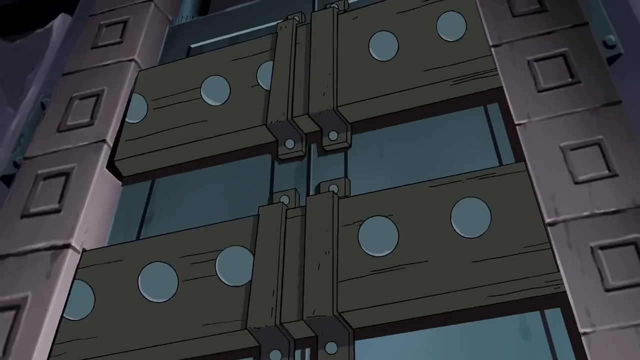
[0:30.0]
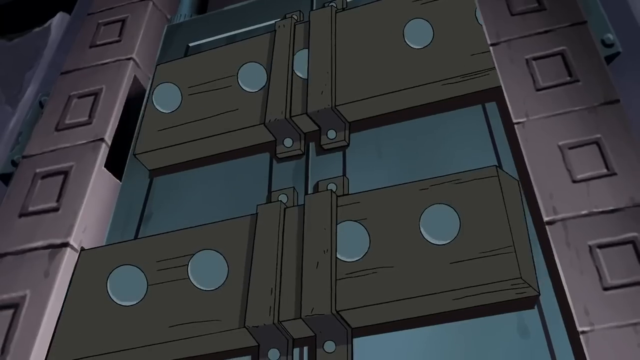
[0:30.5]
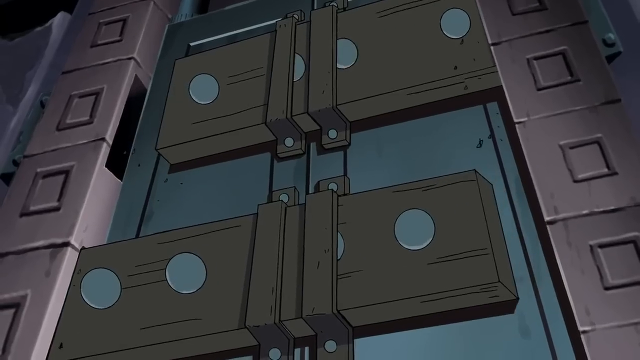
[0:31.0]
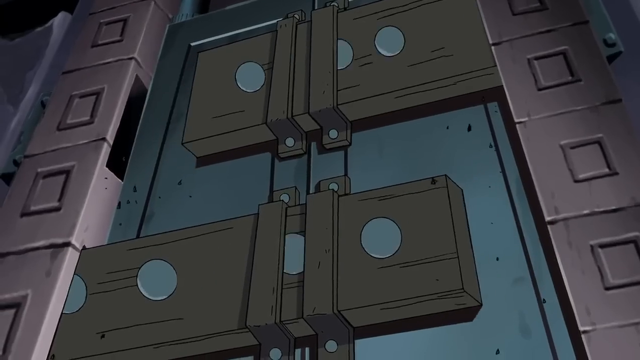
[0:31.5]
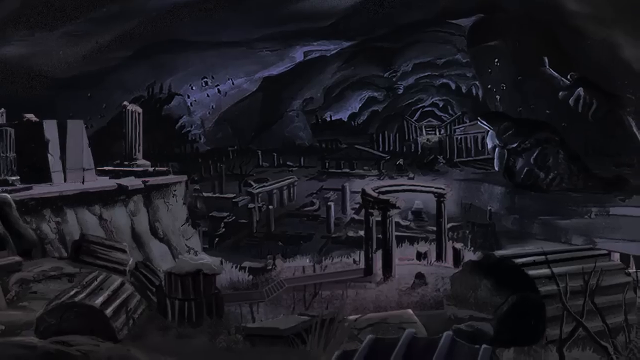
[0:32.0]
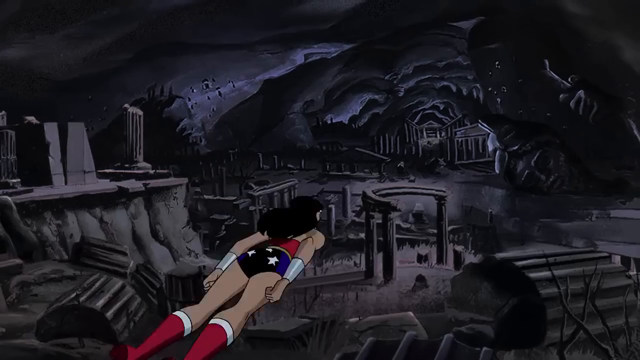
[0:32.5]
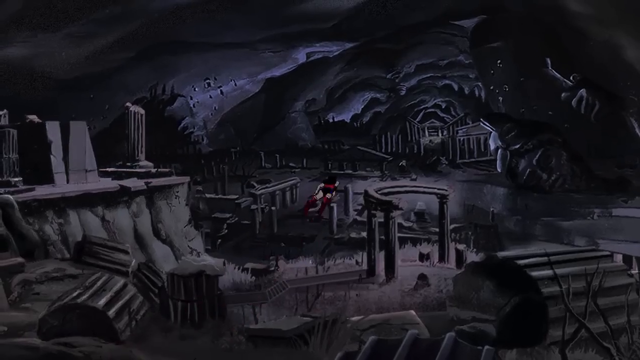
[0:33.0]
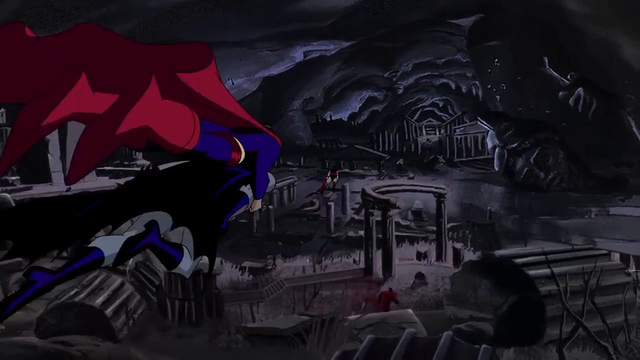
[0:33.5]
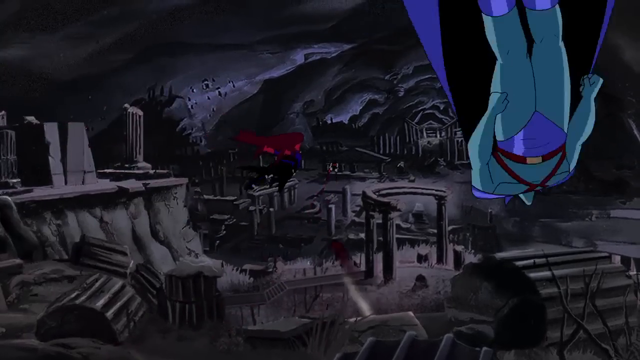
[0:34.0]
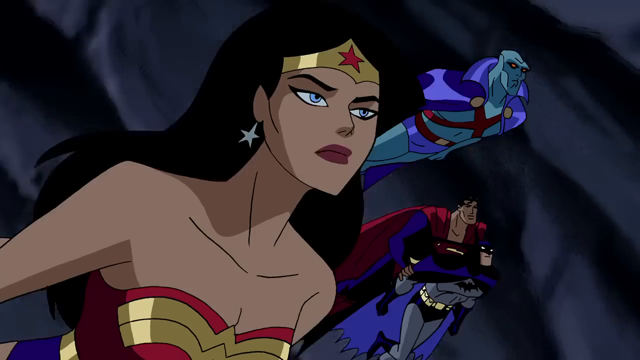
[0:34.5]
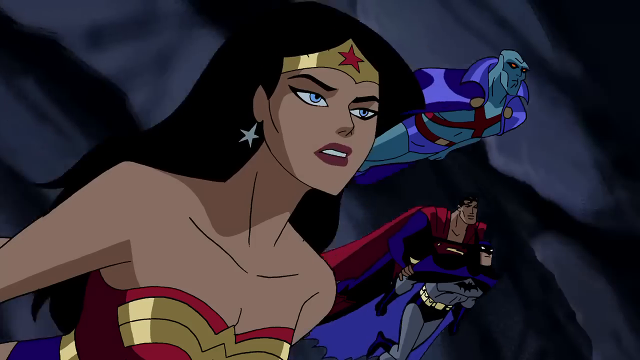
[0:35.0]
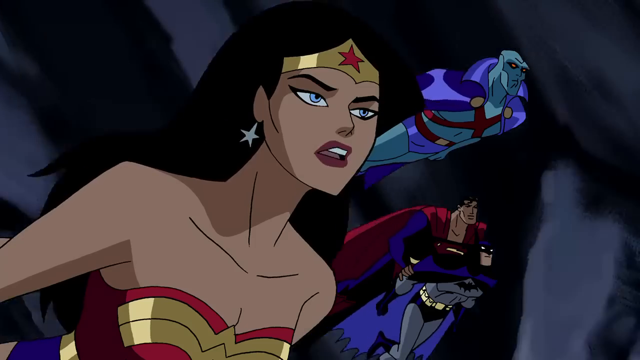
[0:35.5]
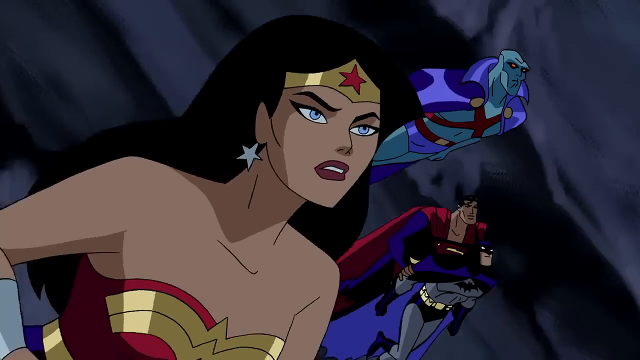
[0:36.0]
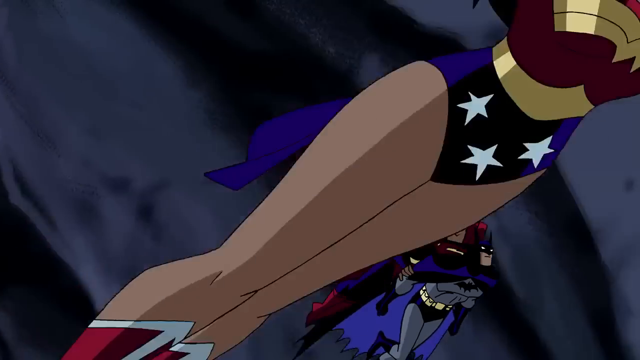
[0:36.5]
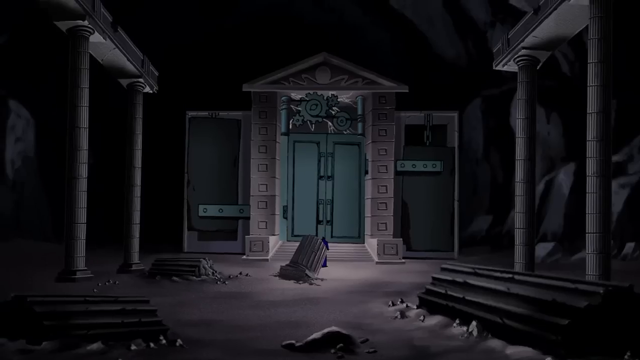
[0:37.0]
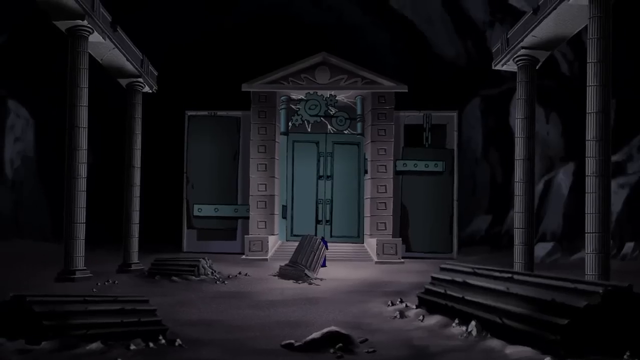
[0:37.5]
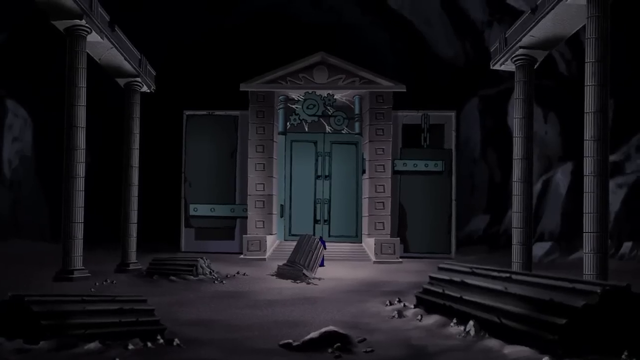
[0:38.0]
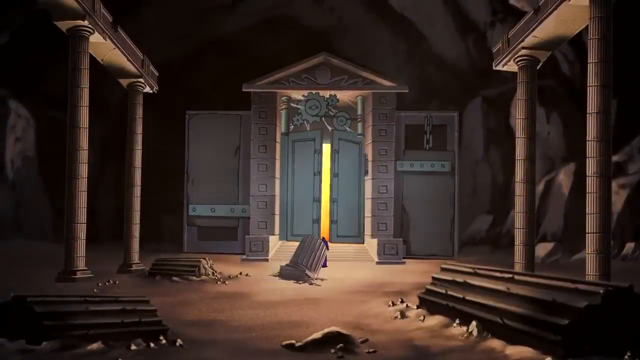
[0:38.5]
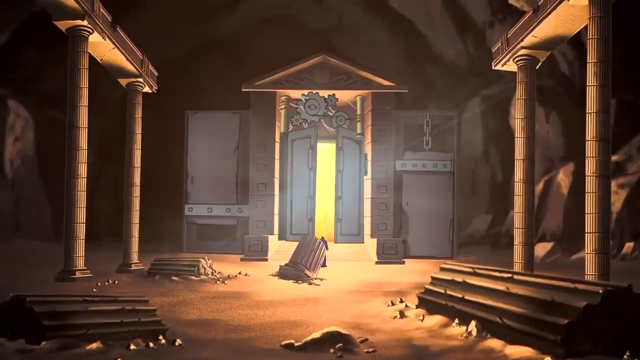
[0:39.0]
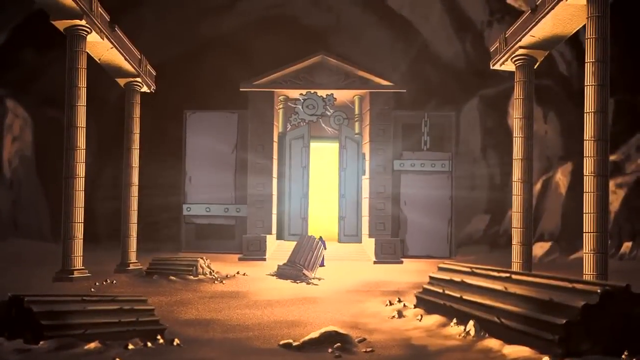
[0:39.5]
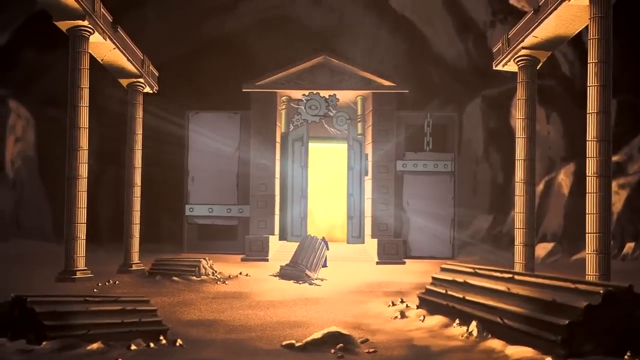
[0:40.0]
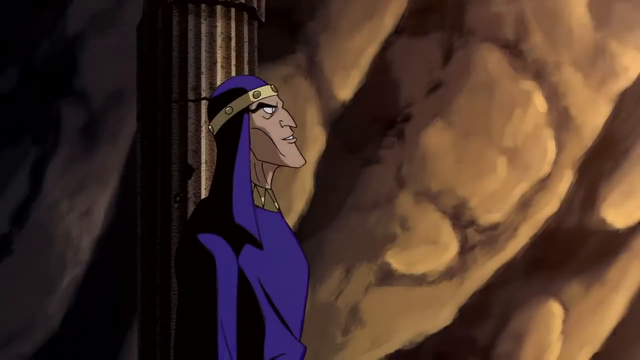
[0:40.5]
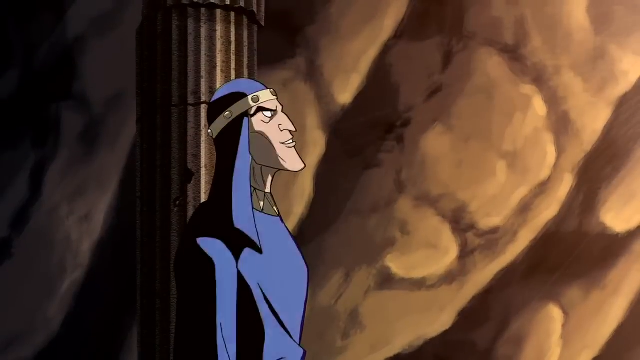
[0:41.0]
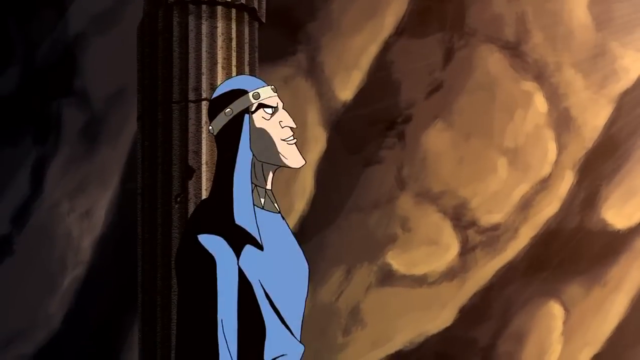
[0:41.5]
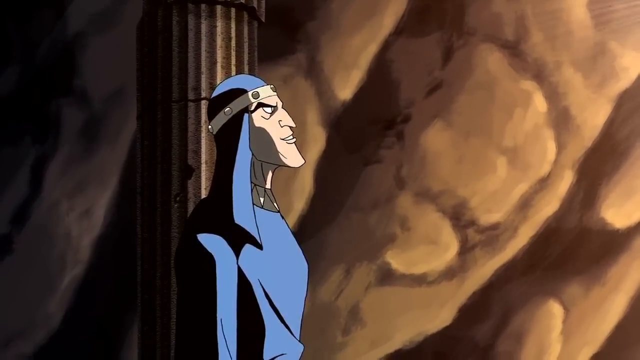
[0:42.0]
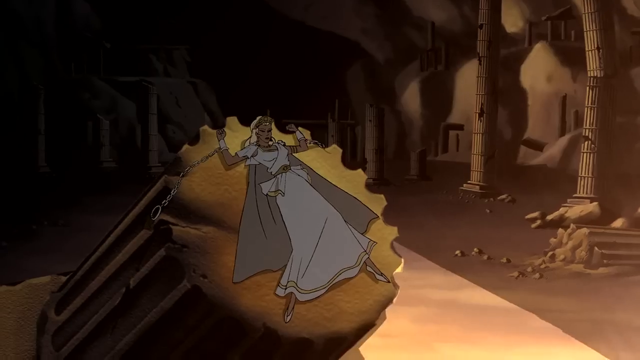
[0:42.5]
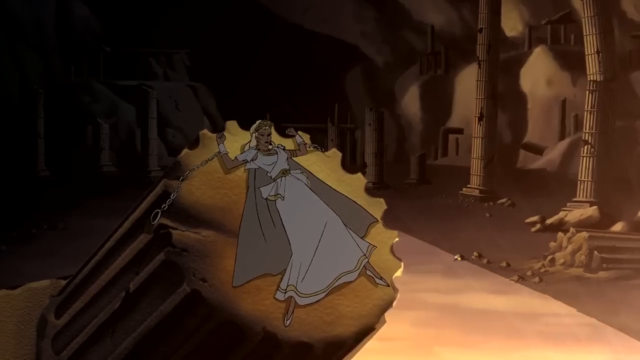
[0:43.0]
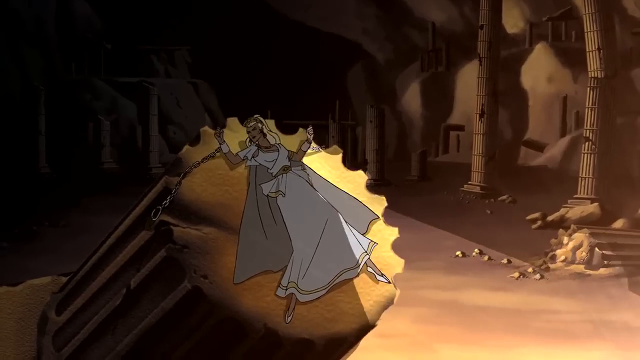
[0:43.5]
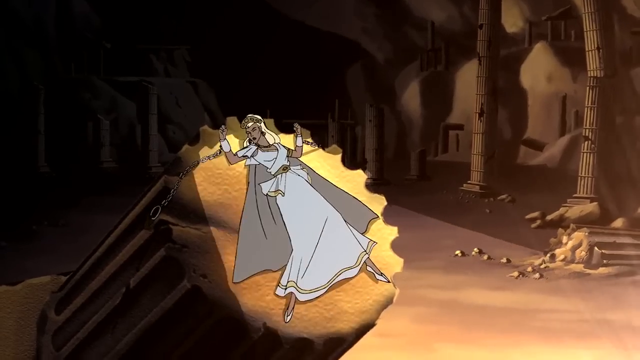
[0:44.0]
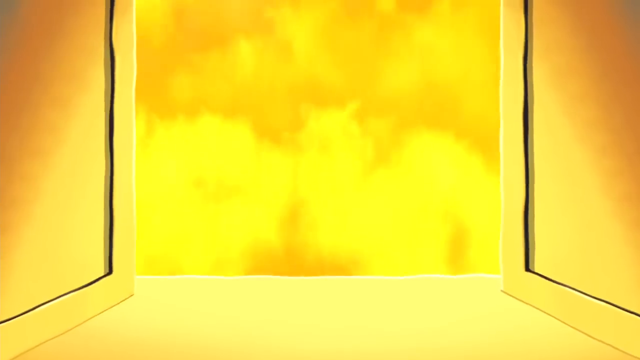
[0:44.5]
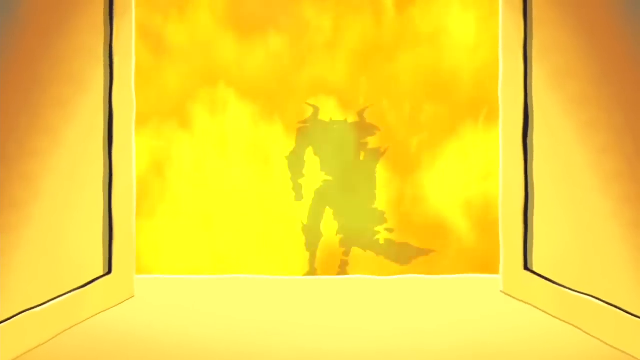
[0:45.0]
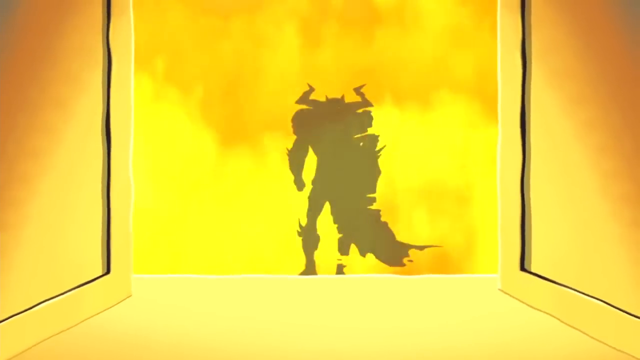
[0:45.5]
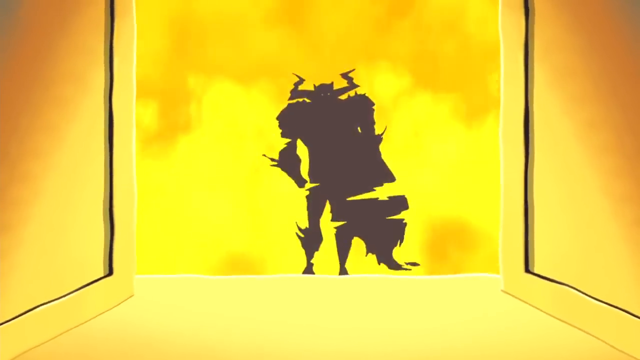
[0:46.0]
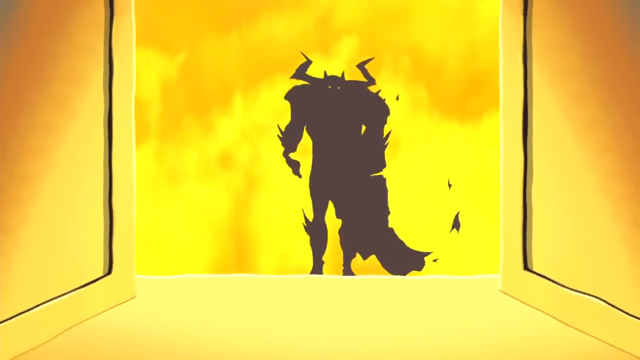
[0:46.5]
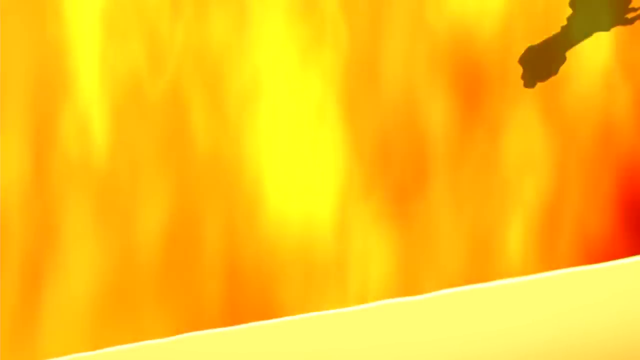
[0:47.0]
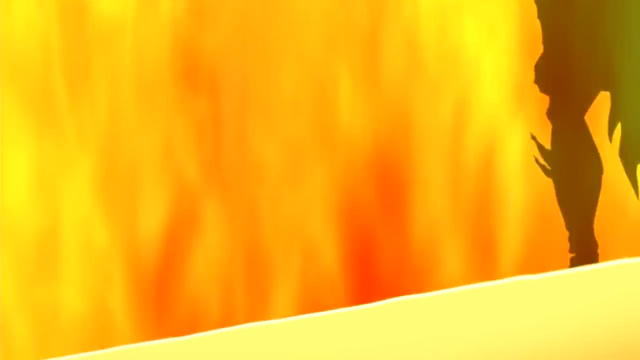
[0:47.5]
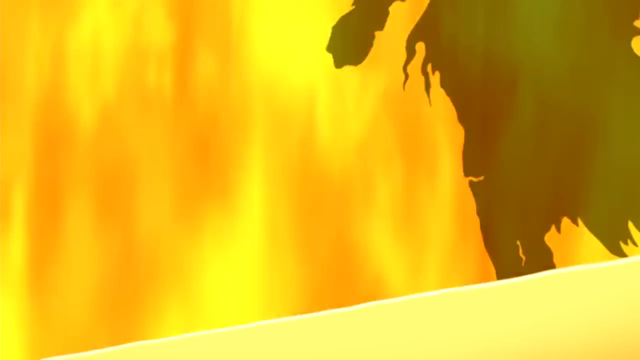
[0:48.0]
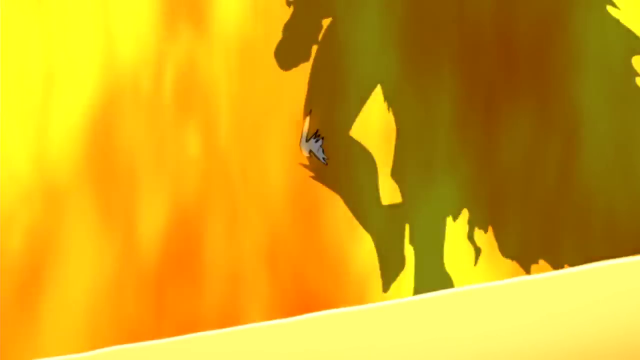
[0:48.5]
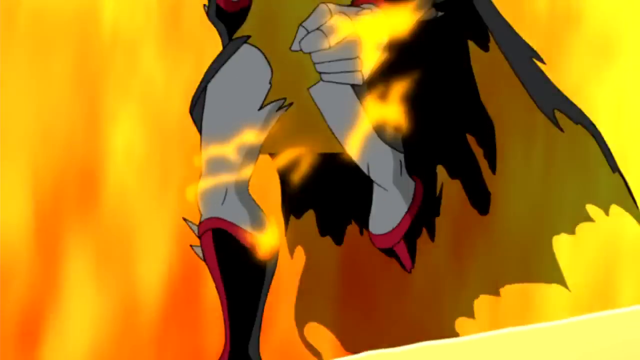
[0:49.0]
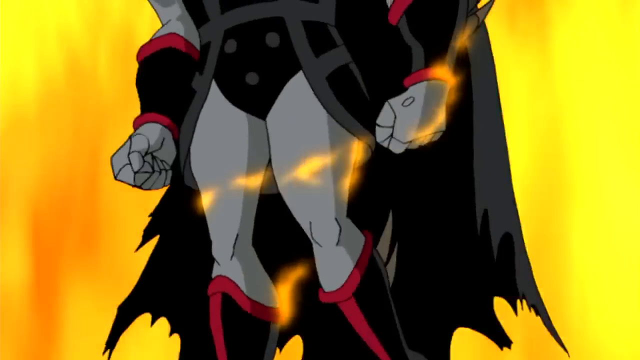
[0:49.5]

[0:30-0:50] The view shows the walls inside the dungeon, where locks appear to block the doors. The lock on the top portion of the door moves away toward the right side, while the lock toward the bottom of the door glides away to the left side of the screen. The bolts in the locks are visible; the locks look dark gray and the bolts look like round pewter bolts. The scene then changes, and what looks like a flying superhero flies into the screen. The background is dark and dreary, in shades of black, lavender and gray; it is in color but almost looks black and white, while the superhero is definitely in color. He has long black hair and wears a black and red outfit, and apparently black boots, though he is far away in the distance, so this is uncertain.